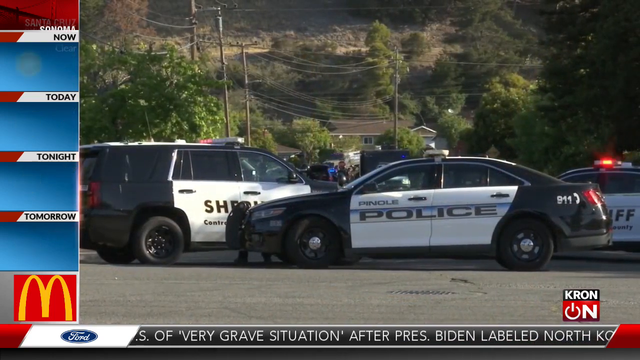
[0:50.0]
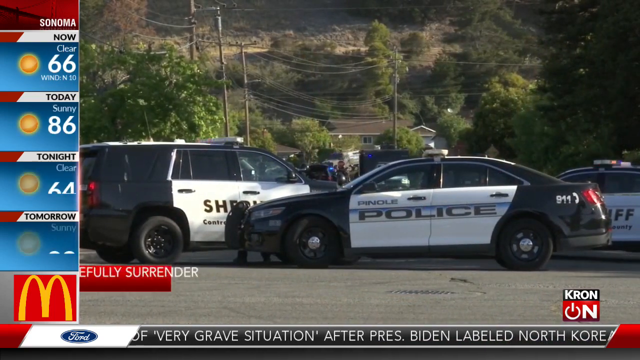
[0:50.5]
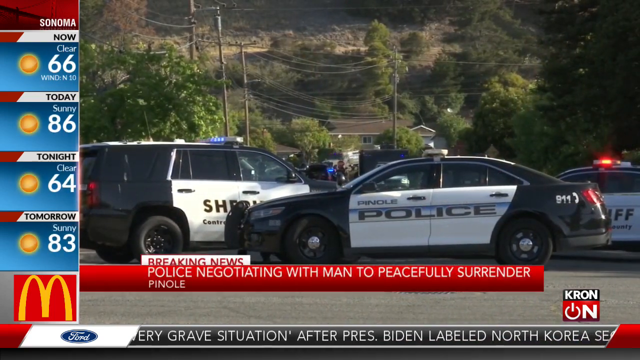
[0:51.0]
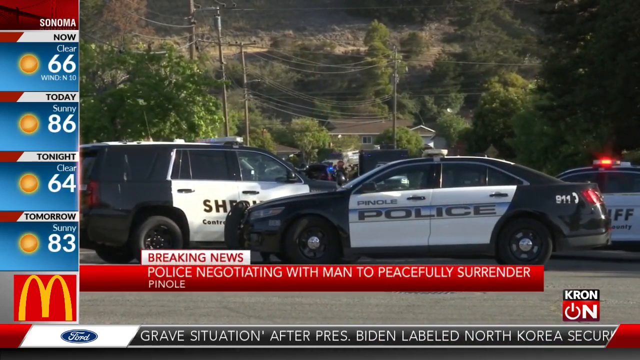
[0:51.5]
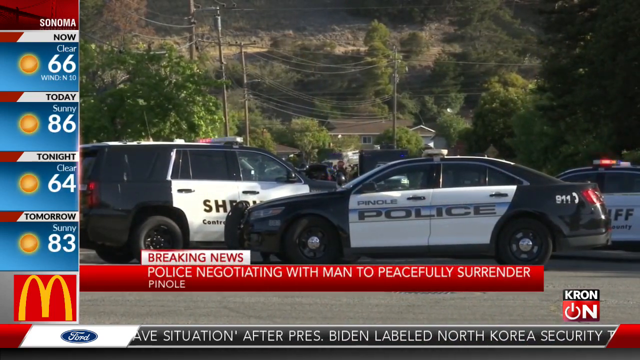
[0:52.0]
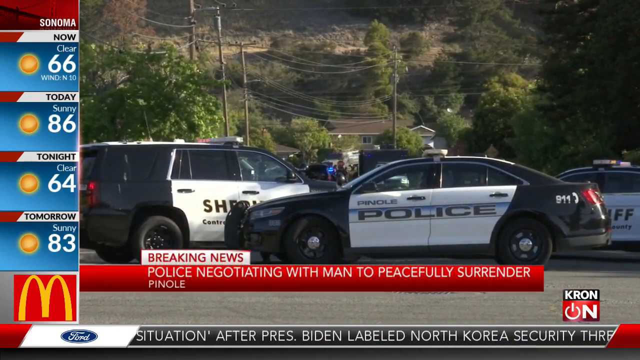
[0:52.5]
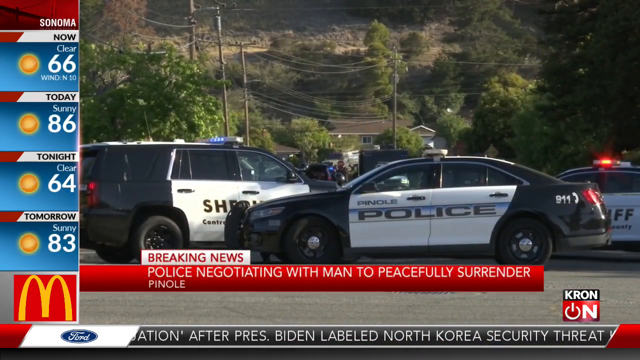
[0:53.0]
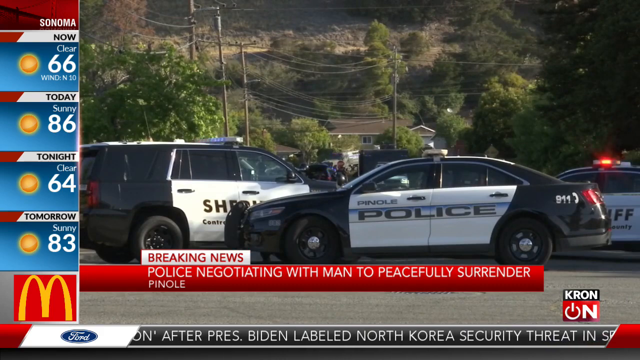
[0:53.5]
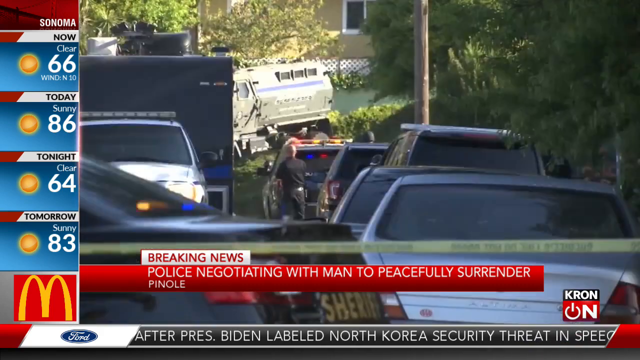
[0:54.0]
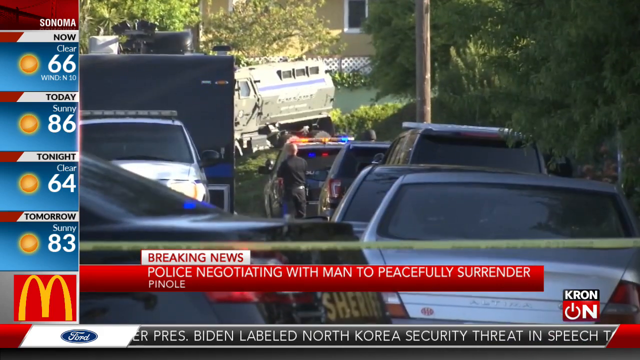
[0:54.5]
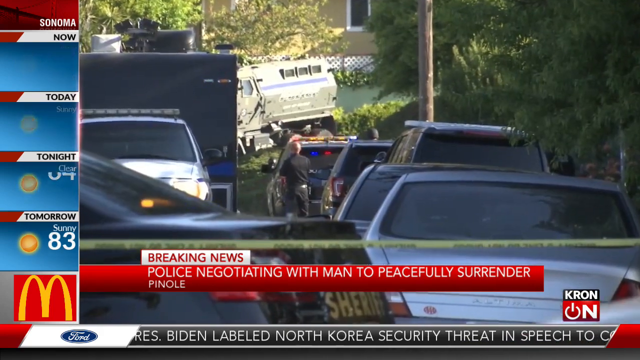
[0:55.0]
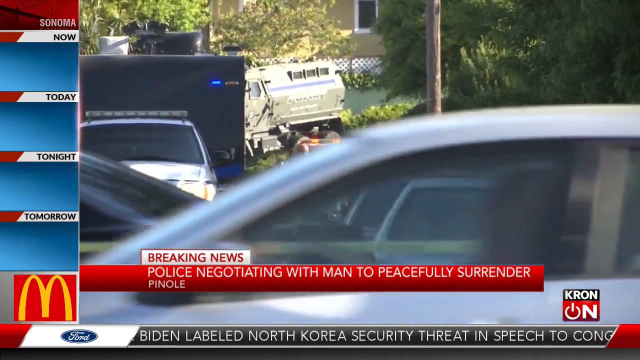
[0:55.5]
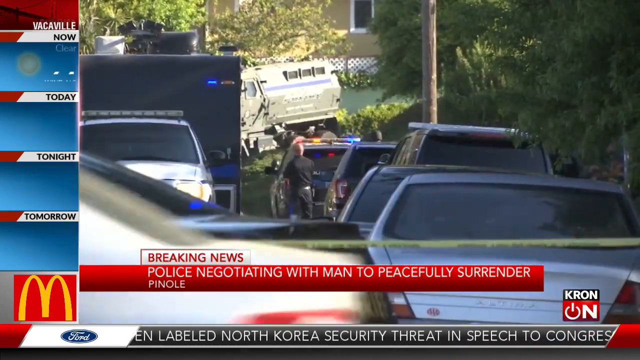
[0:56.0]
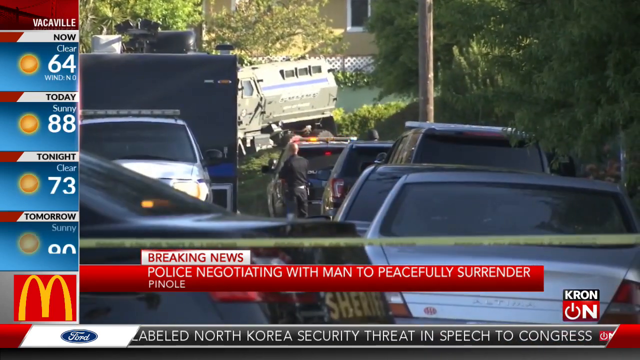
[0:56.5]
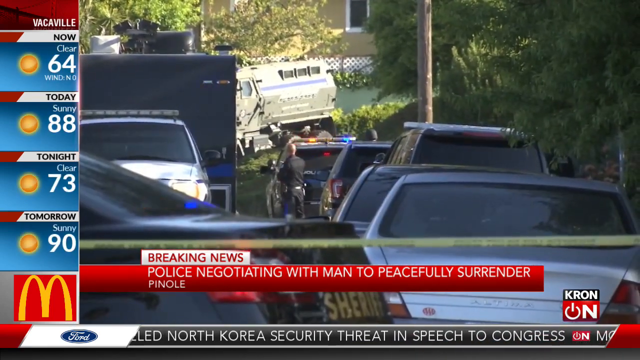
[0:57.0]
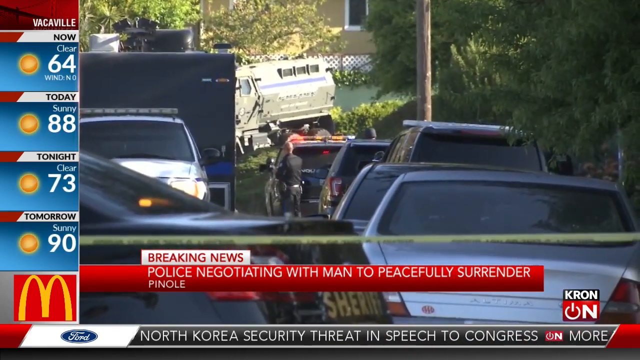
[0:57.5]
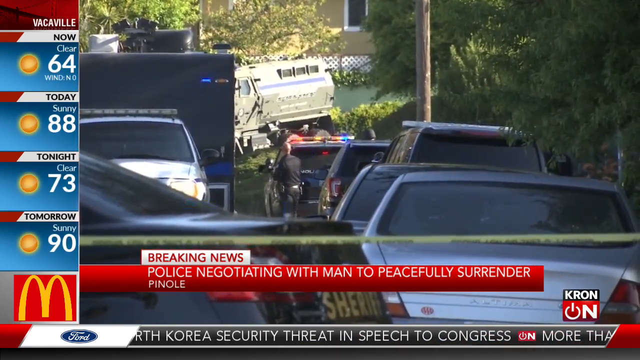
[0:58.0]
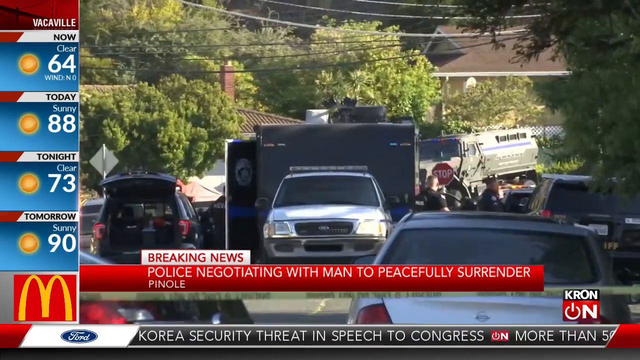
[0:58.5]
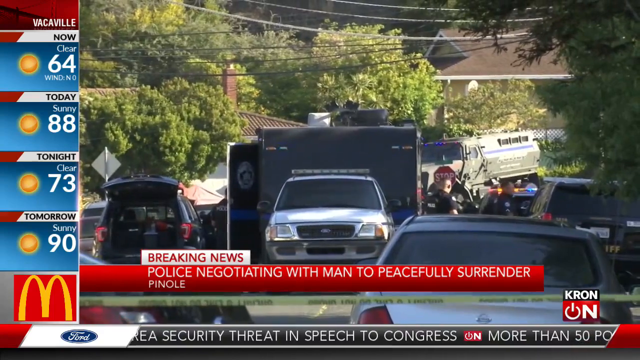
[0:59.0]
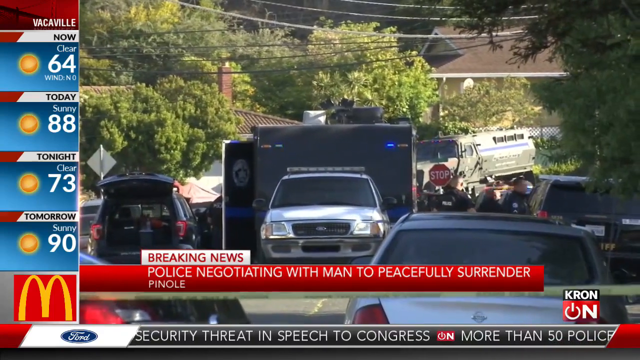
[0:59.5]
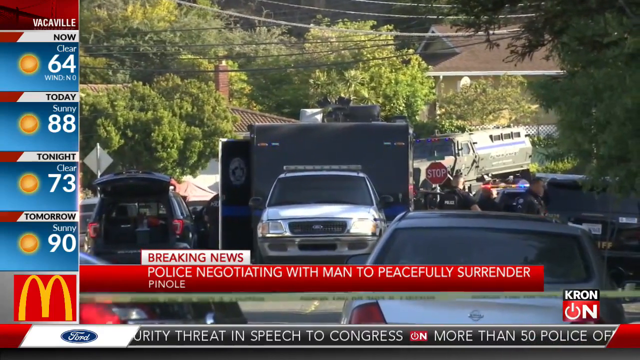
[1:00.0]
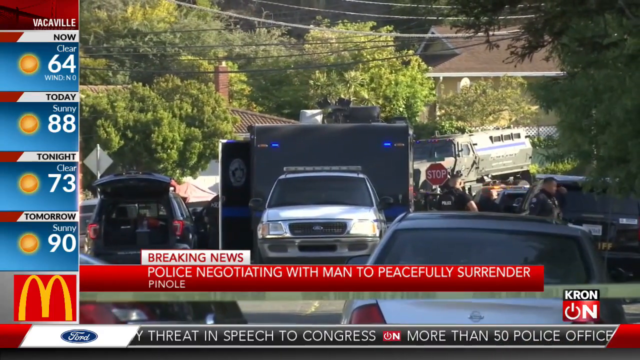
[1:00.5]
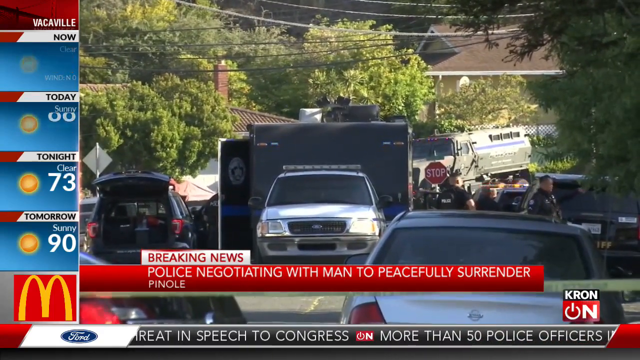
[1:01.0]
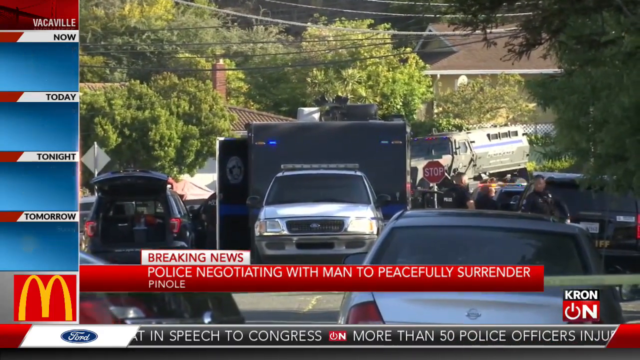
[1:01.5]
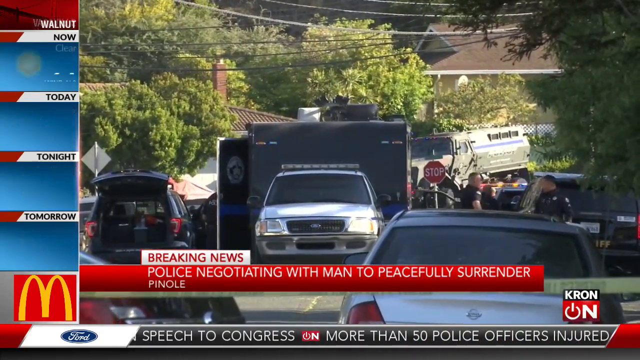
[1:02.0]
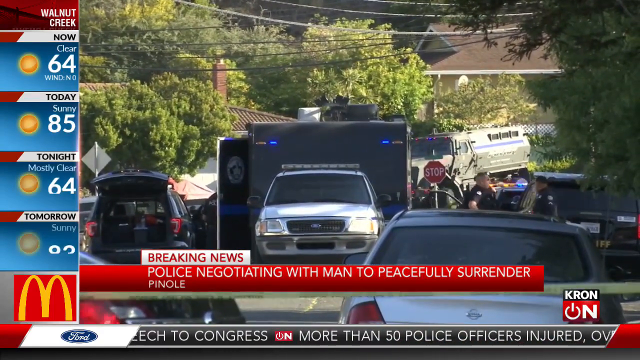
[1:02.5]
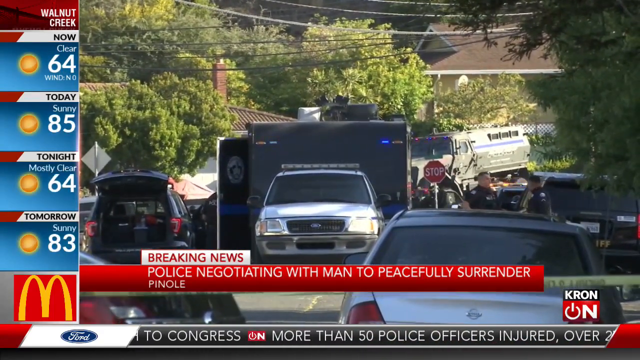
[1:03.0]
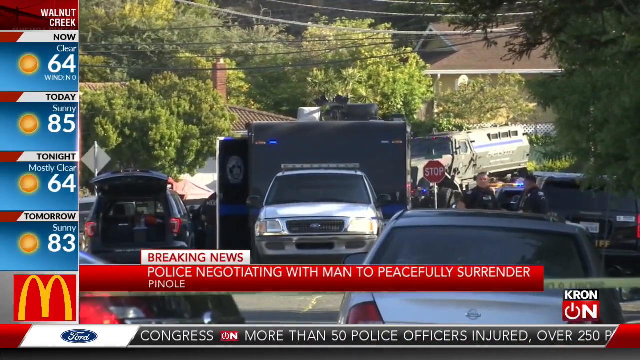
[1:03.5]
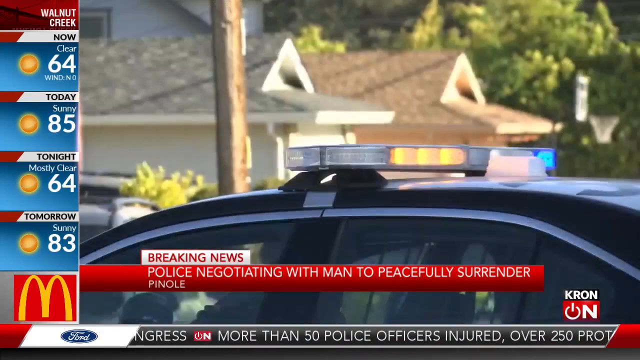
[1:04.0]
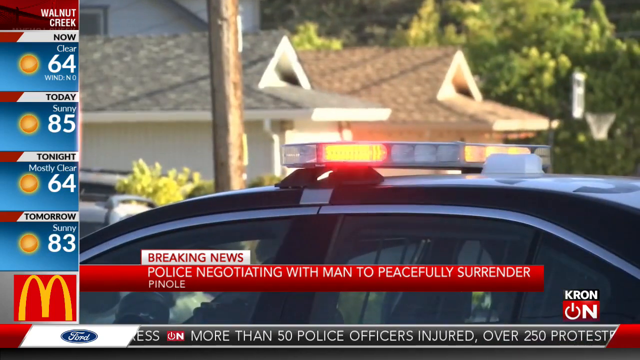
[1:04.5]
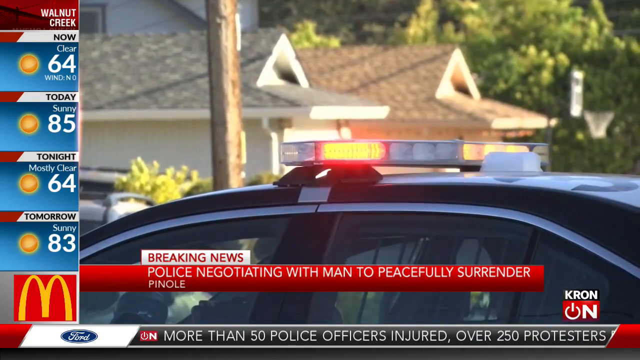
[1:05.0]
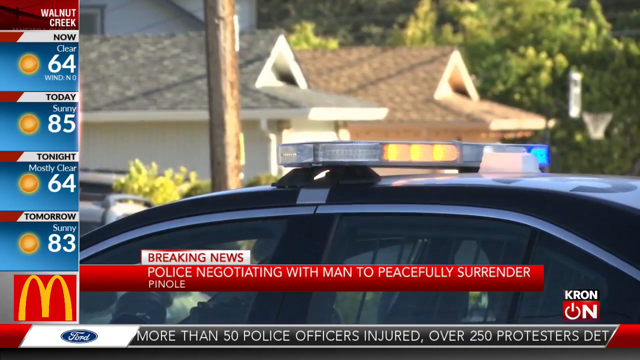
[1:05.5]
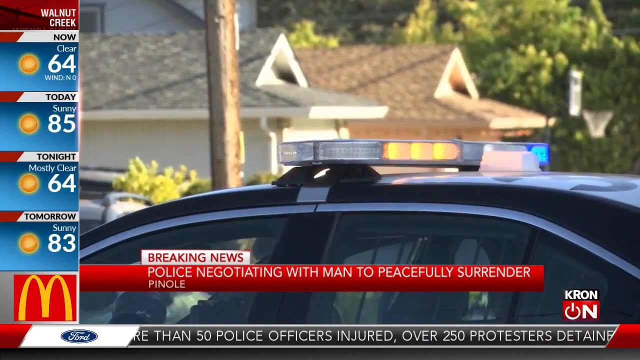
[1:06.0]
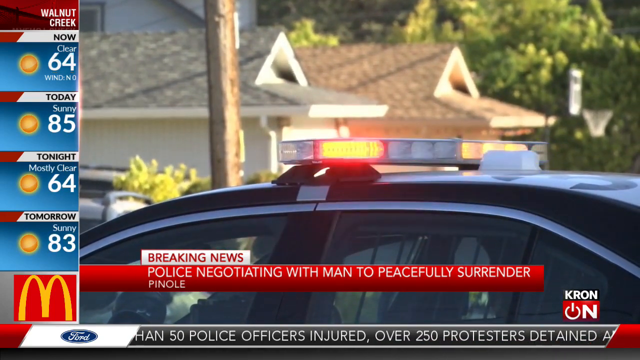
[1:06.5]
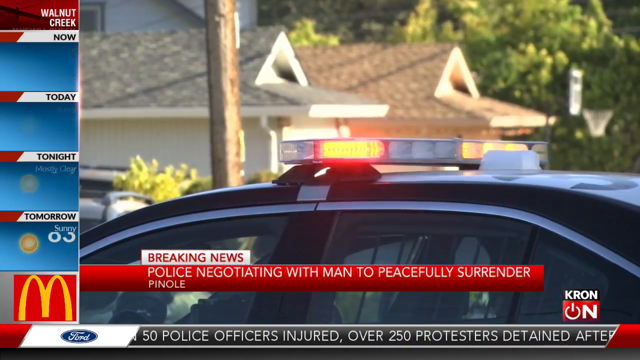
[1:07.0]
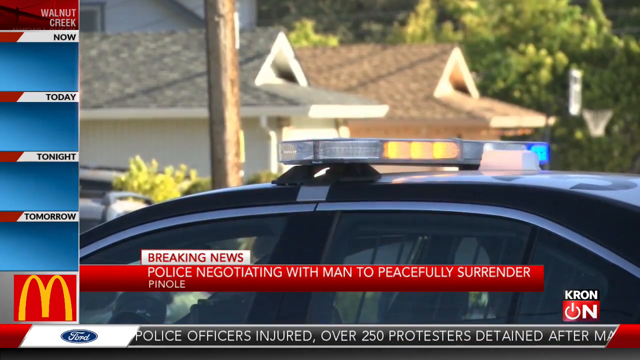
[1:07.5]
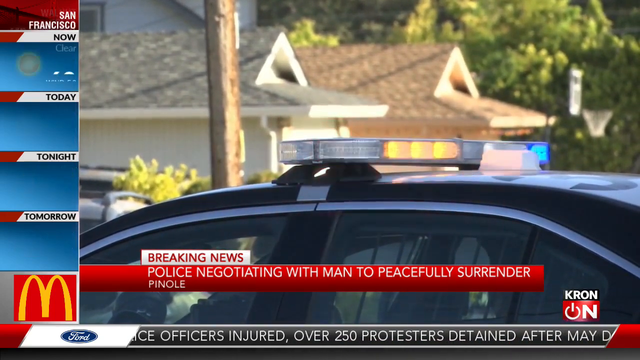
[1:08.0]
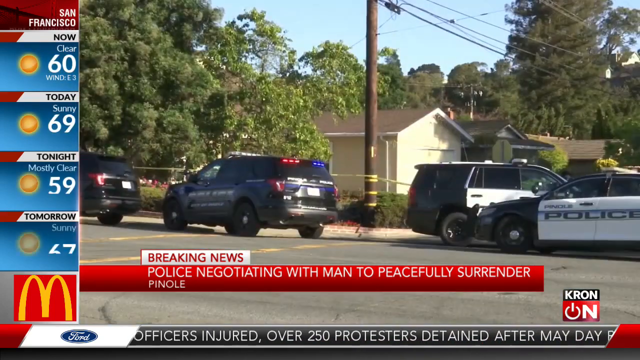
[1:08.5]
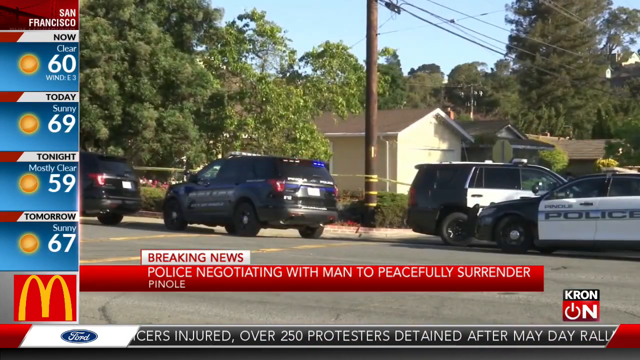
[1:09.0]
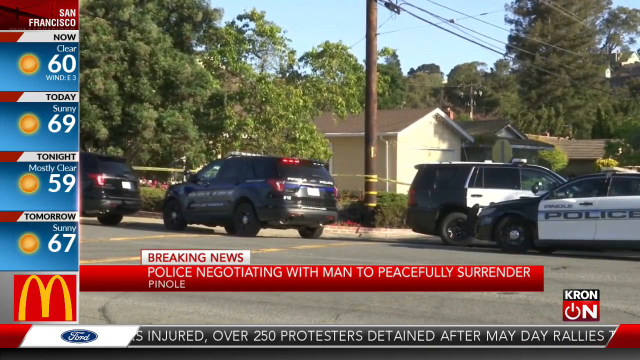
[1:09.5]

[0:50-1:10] The image opens zoomed in on the police cars in the street in front of where the reporters are, sharing the screen with the left column, which now shows the weather in Santa Cruz with the McDonald's symbol at the bottom. On screen are "breaking news" and the line that police are negotiating a peaceful surrender in Pinole. Another image of the same situation shows many parked cars, some of those at the back being police cars. Another view from a different point shows some policemen around the cars. Next comes another zoom in on a police car with its lights flashing, followed by yet another view of the same situation.